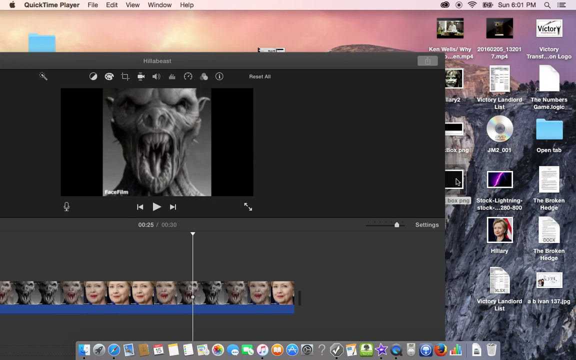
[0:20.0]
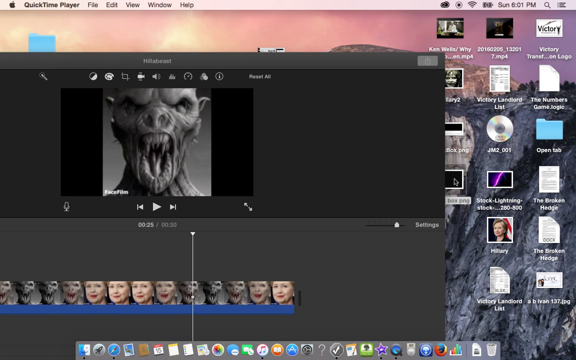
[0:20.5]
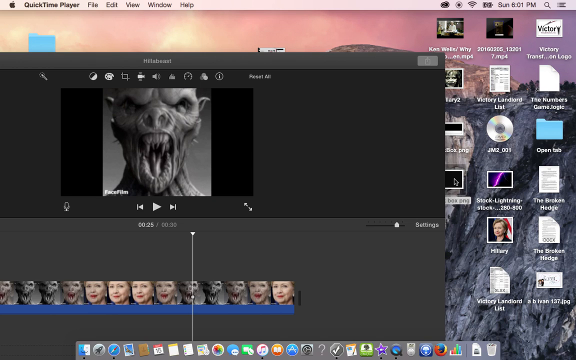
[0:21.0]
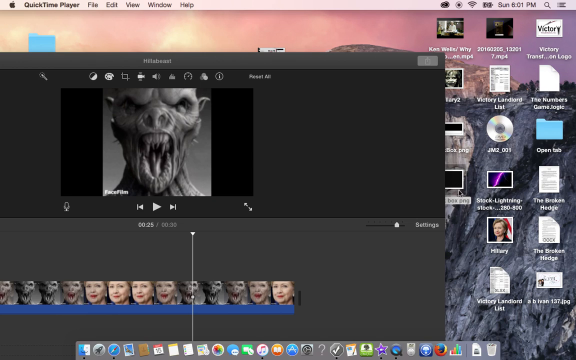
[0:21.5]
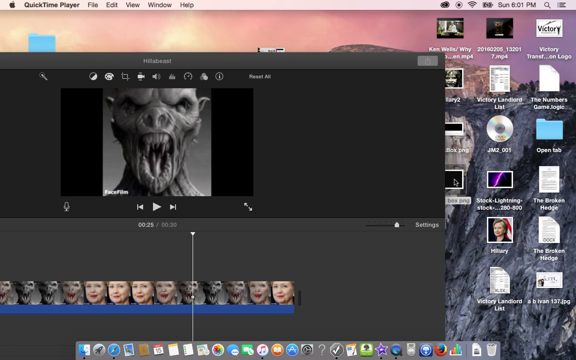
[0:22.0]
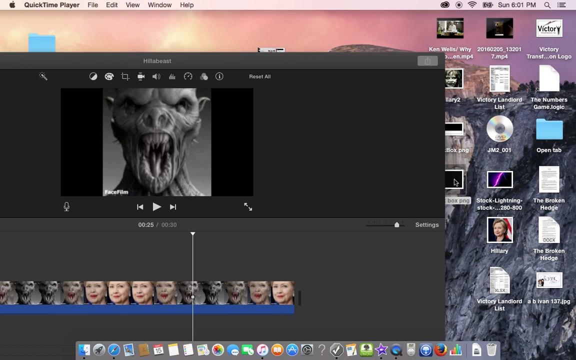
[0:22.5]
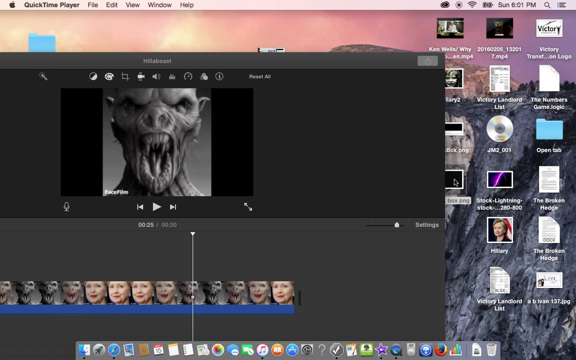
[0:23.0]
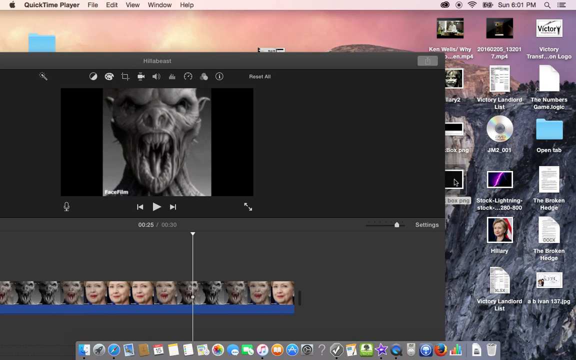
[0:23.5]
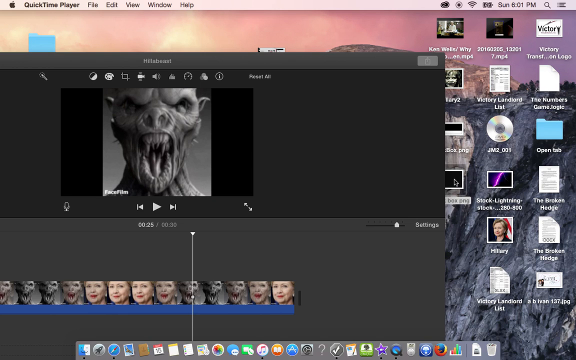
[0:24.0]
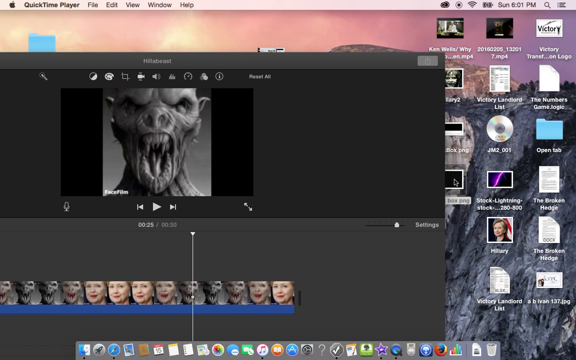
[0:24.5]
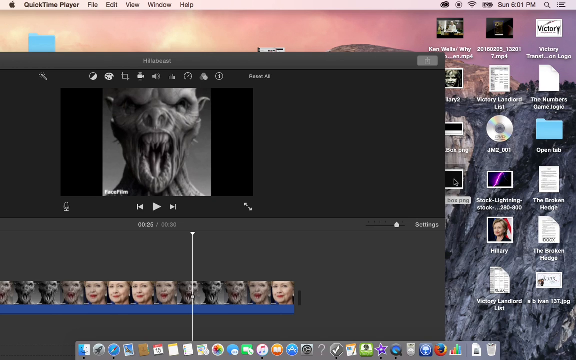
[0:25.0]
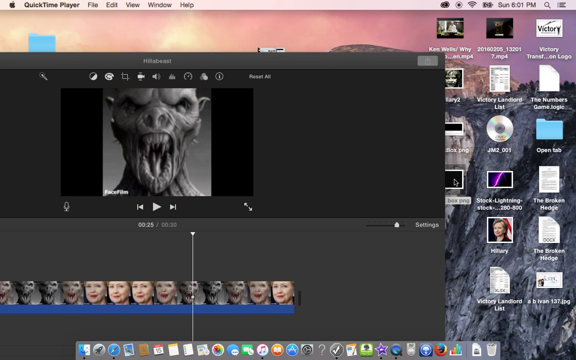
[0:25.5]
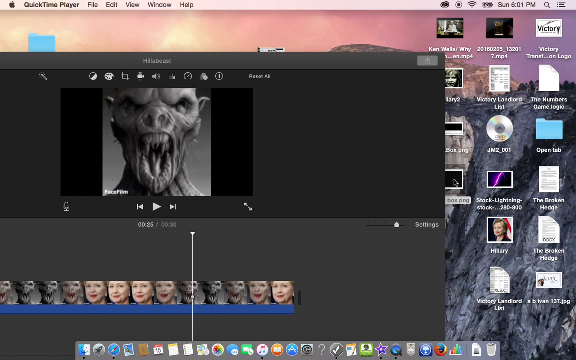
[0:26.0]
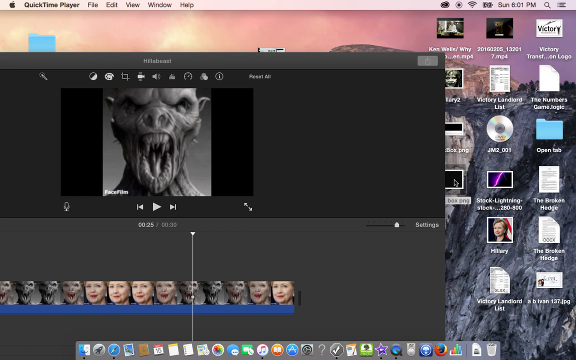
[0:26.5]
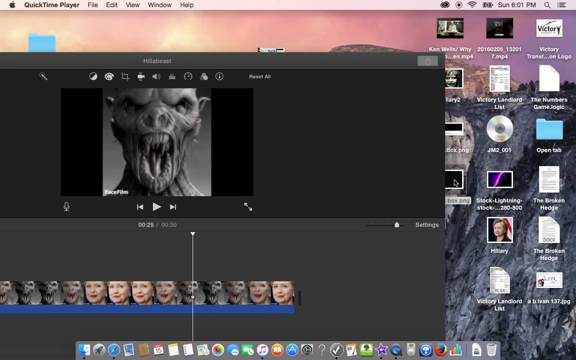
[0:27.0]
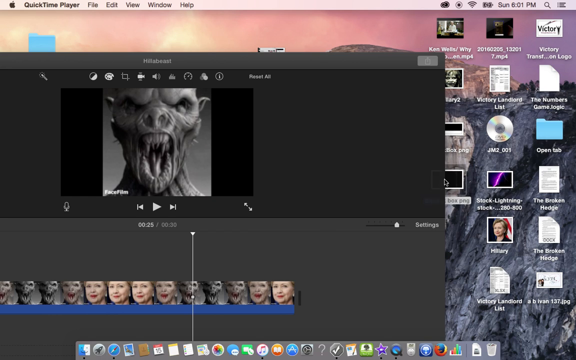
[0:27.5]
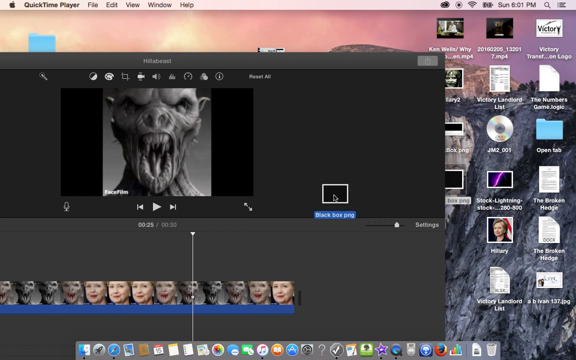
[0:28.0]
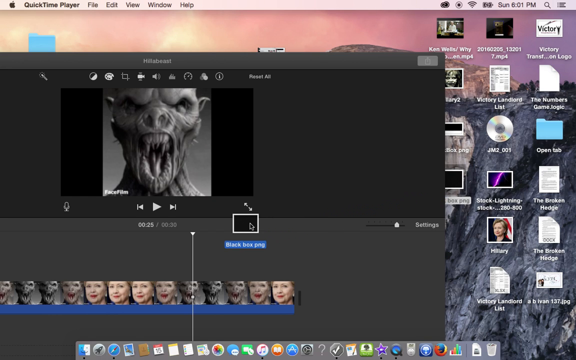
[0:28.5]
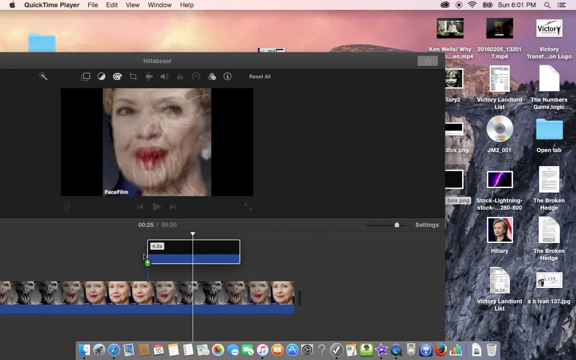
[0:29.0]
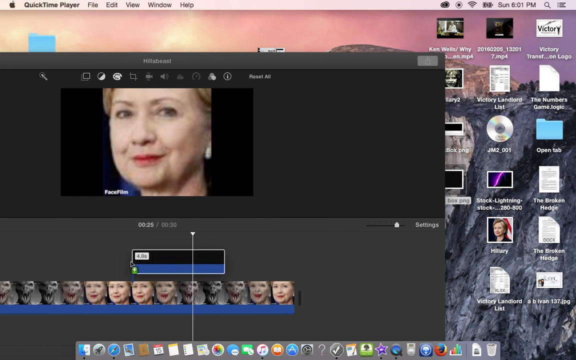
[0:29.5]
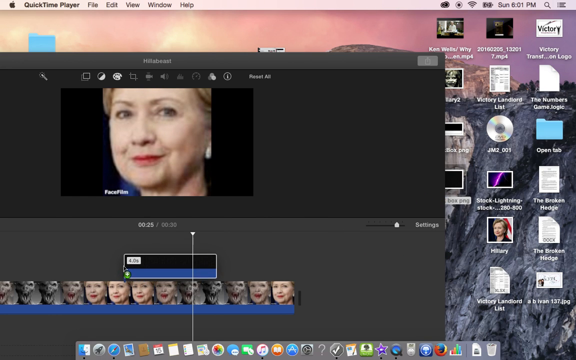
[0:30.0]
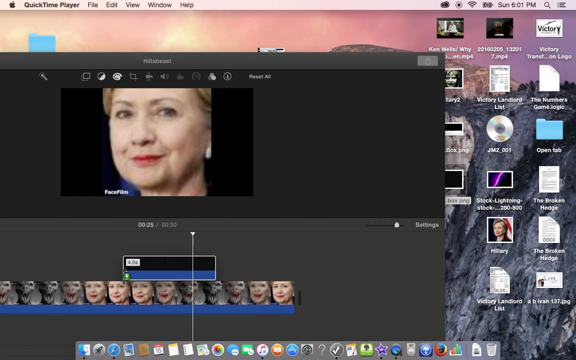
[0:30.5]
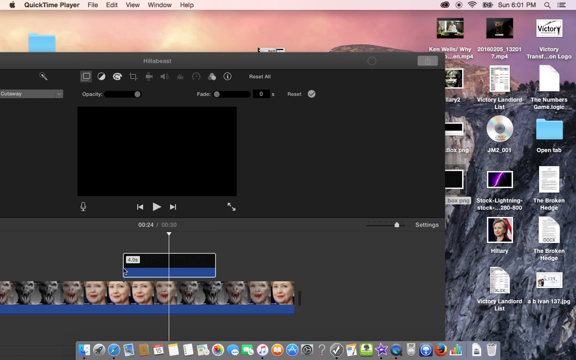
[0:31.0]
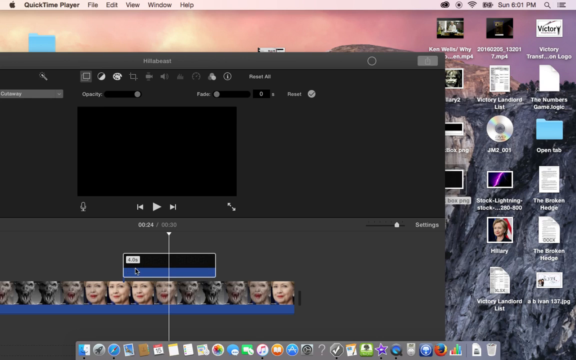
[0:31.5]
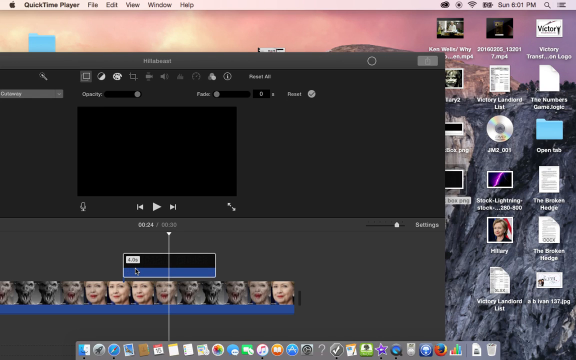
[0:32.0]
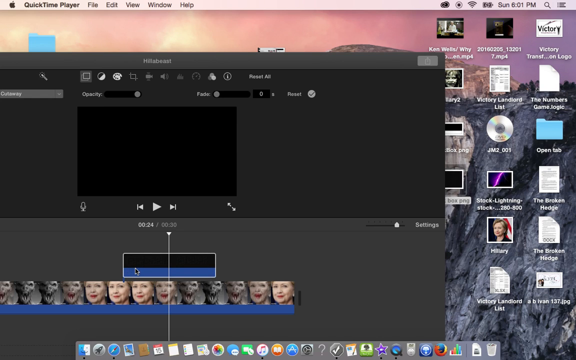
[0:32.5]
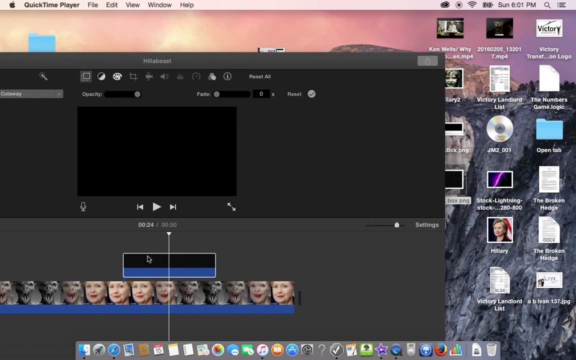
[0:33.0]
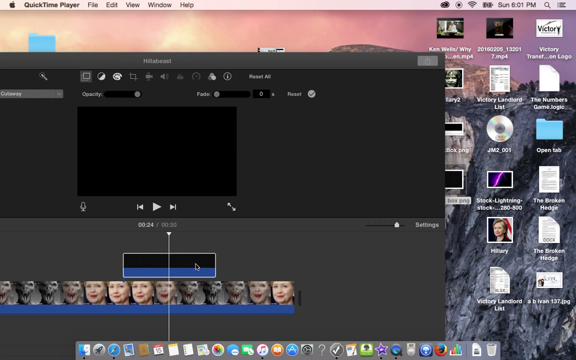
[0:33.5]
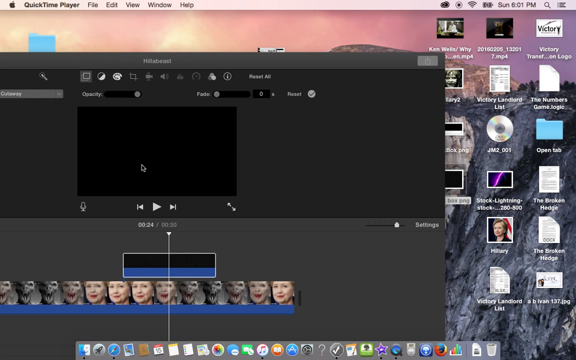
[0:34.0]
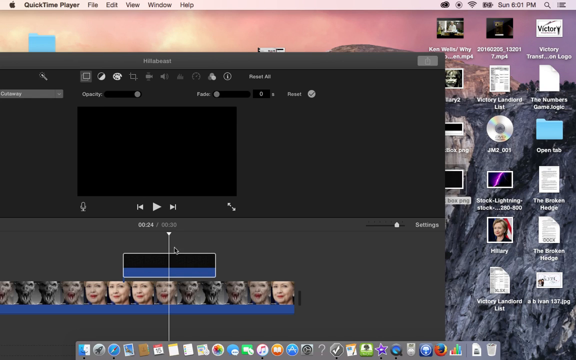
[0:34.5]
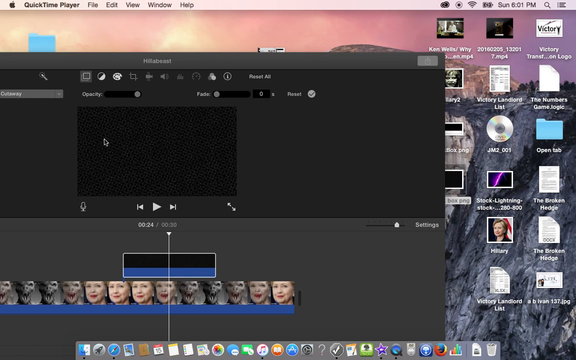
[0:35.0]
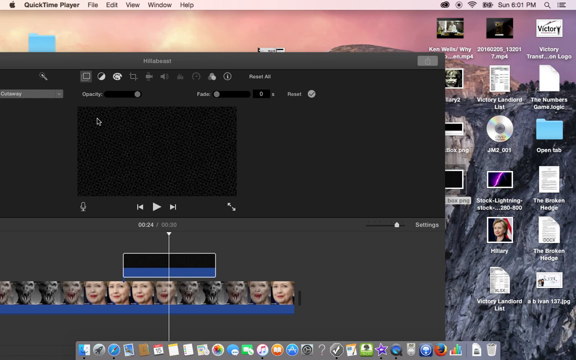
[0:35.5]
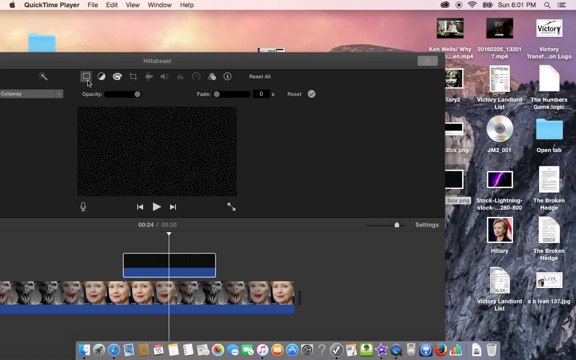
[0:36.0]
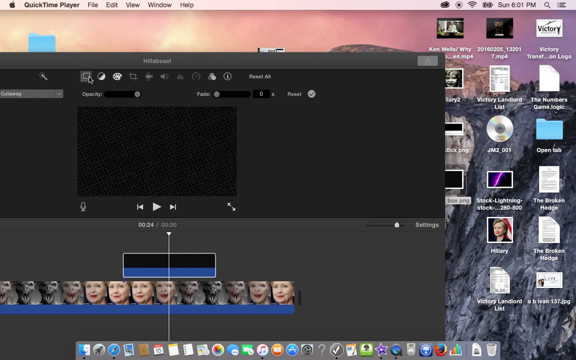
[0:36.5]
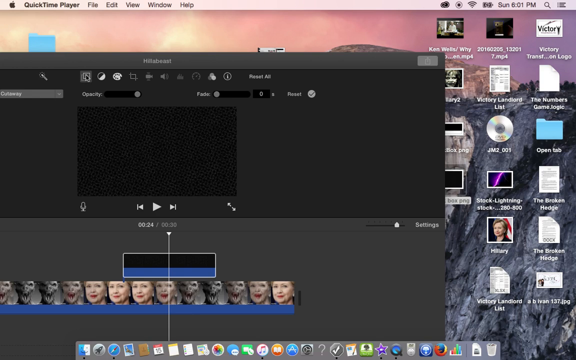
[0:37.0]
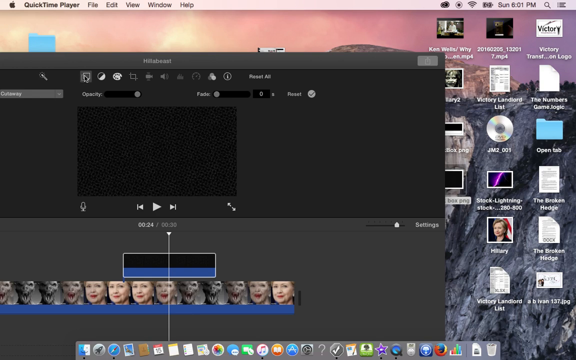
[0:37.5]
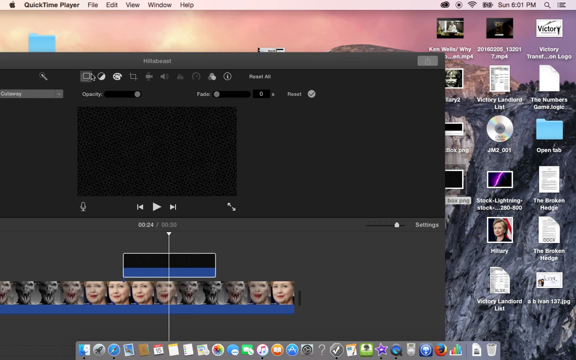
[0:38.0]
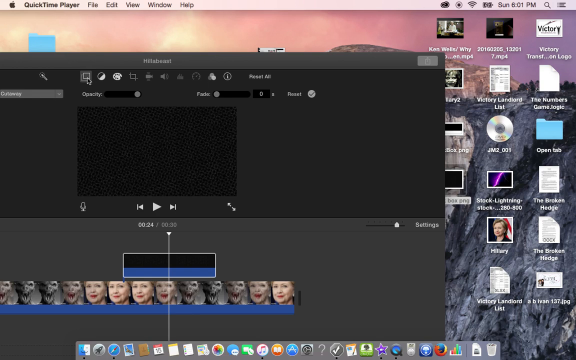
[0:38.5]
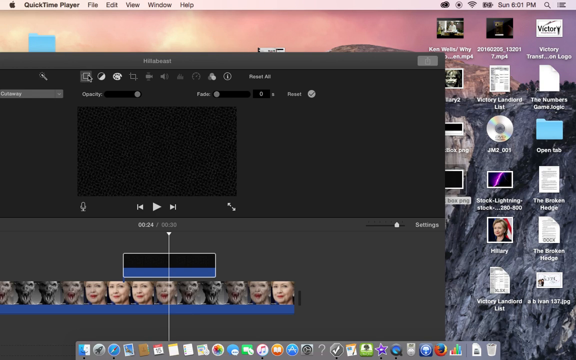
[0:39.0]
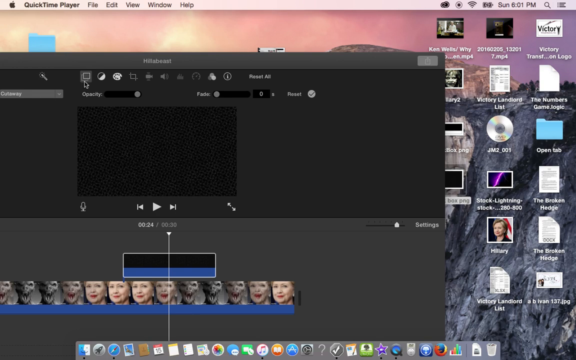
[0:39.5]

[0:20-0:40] On an Apple desktop, a black-and-white picture of a monster is being edited. The person has placed a picture of Hillary Clinton on the screen and presses something to edit the picture further. The top of the screen shows that the computer is connected to Wi-Fi, and the day and time read Sunday, 6:01 p.m. There is a search option, and the desktop has items with names that include "victory". In the top left corner are the Apple logo, "QuickTime Player" and the options File, Edit, View and Window.